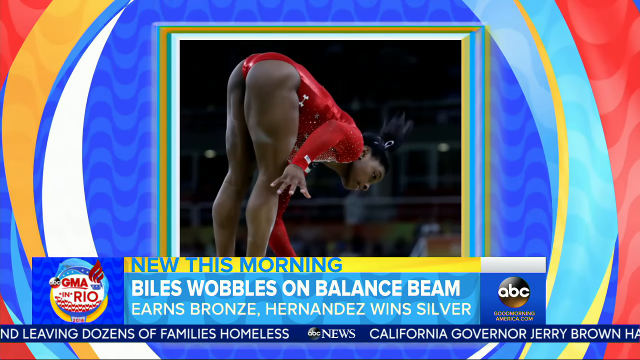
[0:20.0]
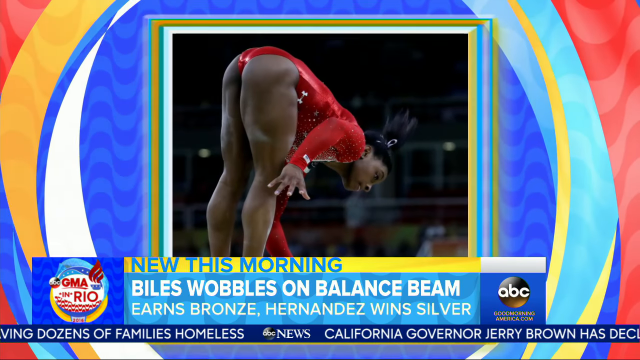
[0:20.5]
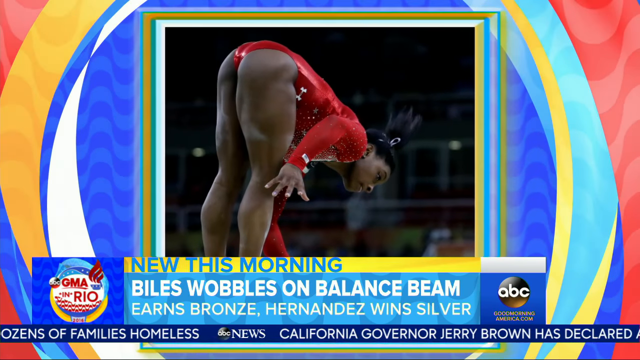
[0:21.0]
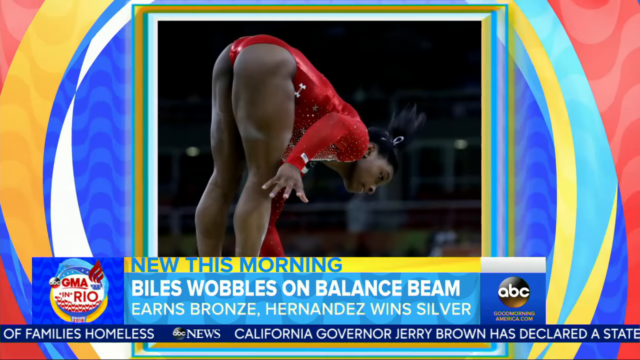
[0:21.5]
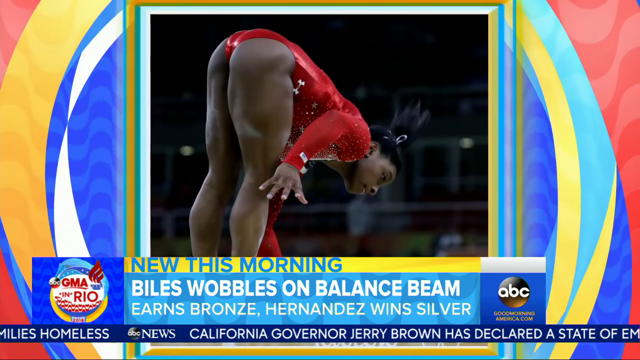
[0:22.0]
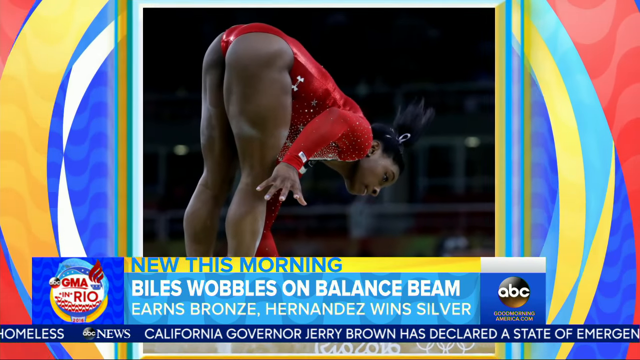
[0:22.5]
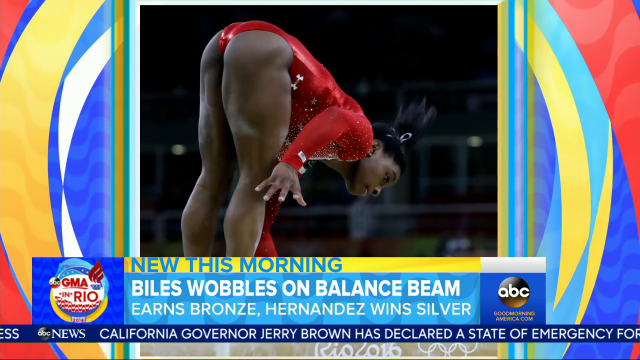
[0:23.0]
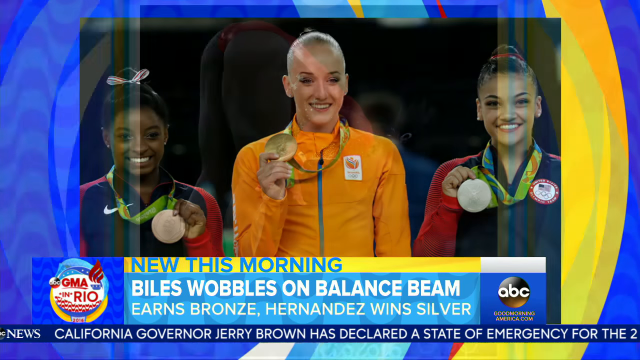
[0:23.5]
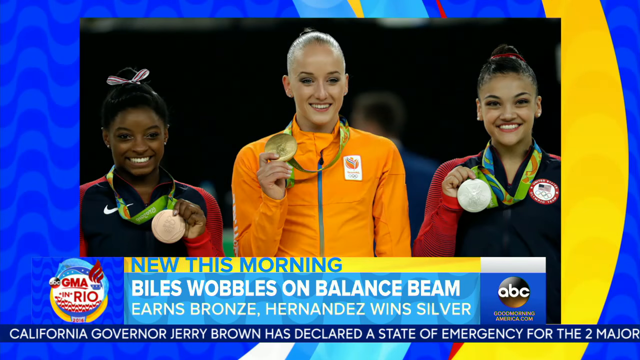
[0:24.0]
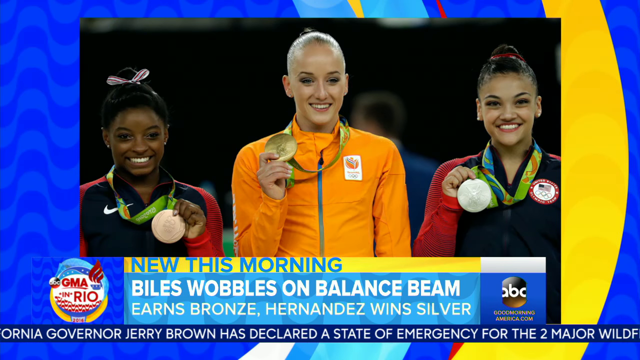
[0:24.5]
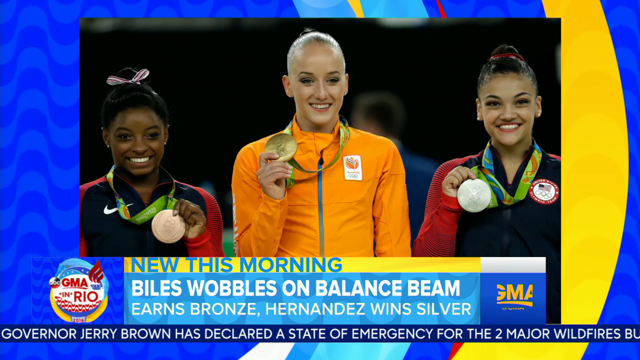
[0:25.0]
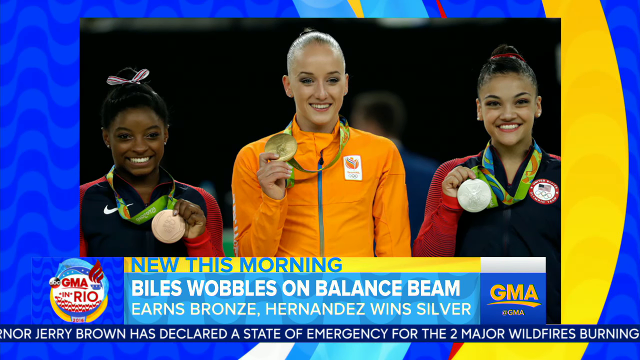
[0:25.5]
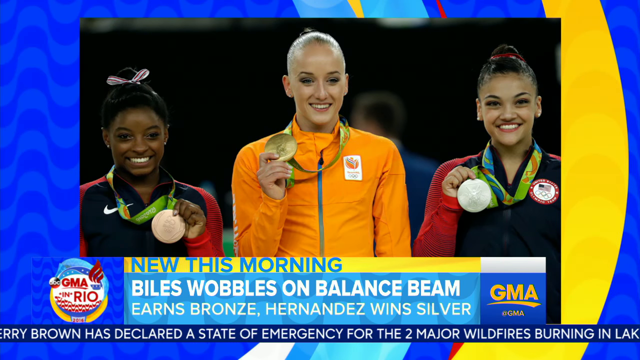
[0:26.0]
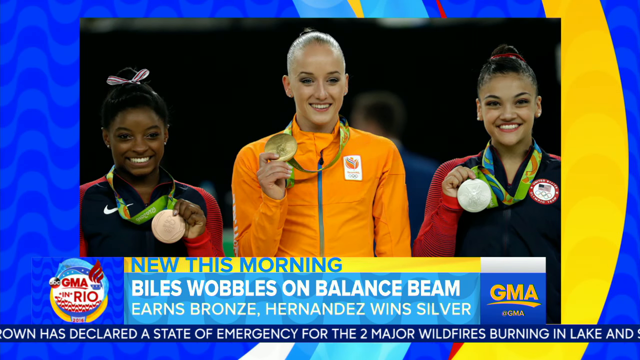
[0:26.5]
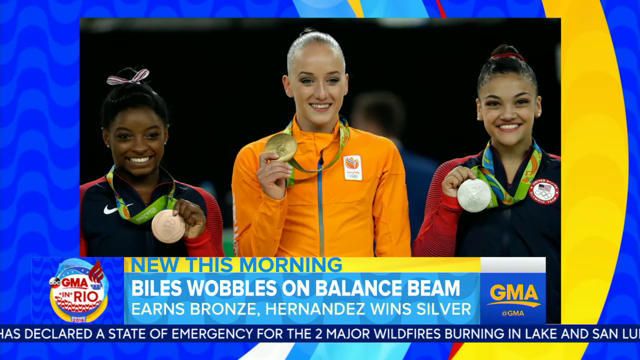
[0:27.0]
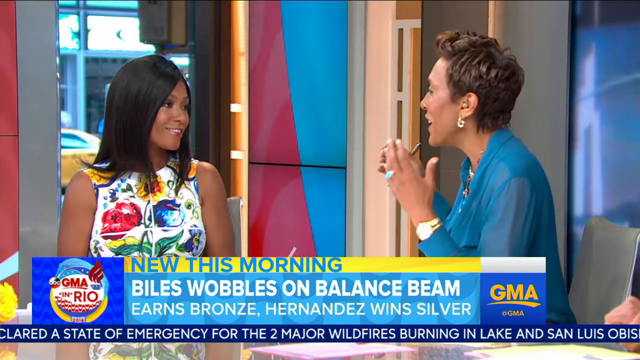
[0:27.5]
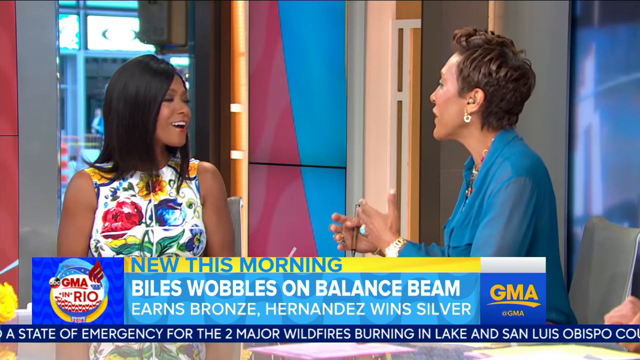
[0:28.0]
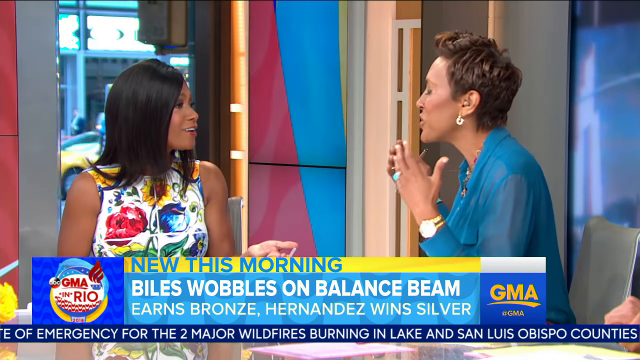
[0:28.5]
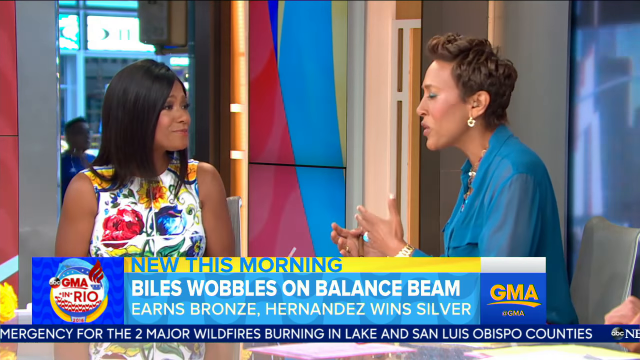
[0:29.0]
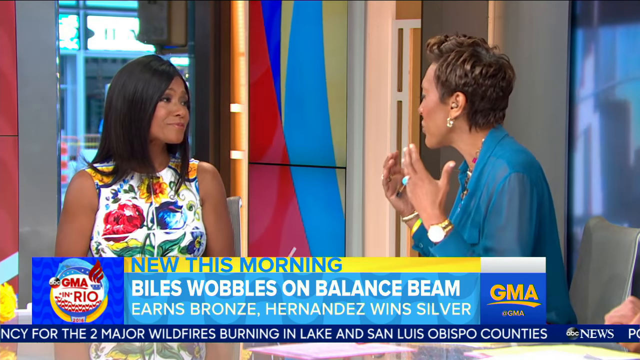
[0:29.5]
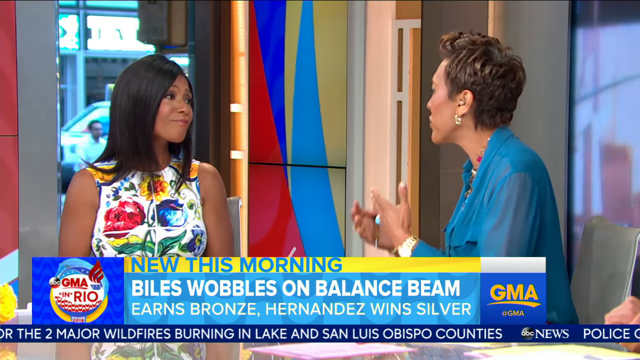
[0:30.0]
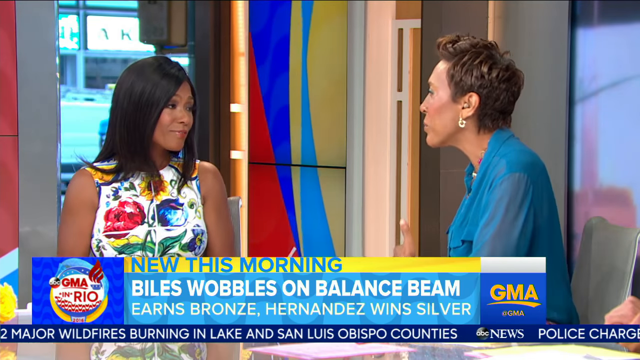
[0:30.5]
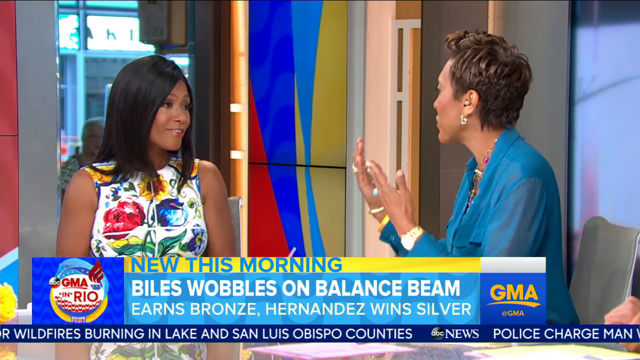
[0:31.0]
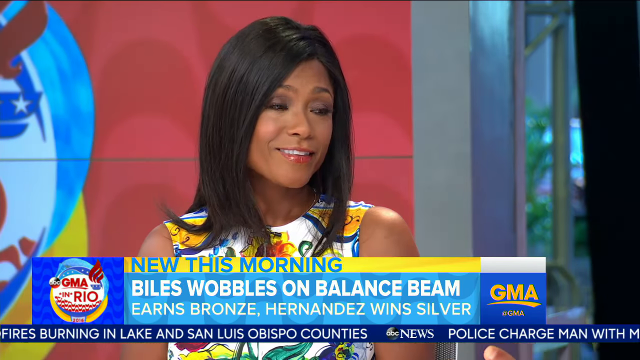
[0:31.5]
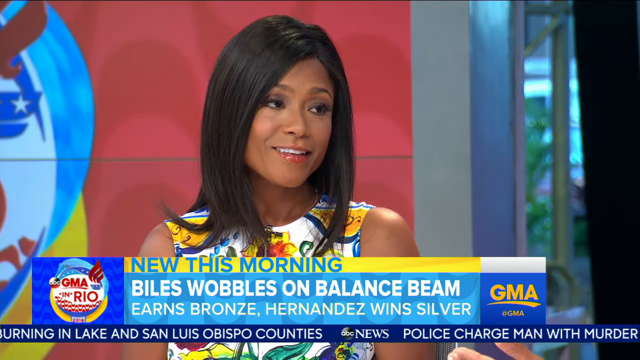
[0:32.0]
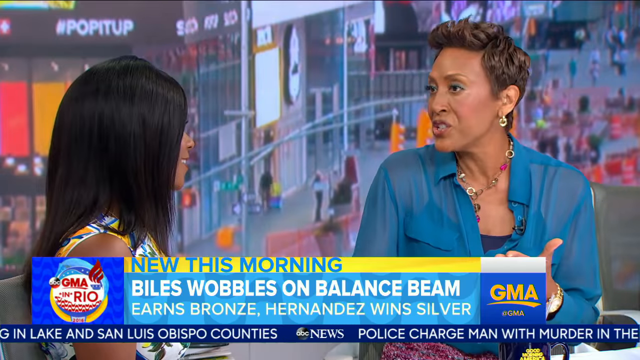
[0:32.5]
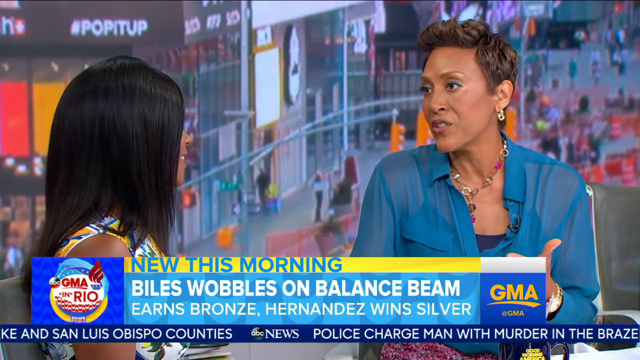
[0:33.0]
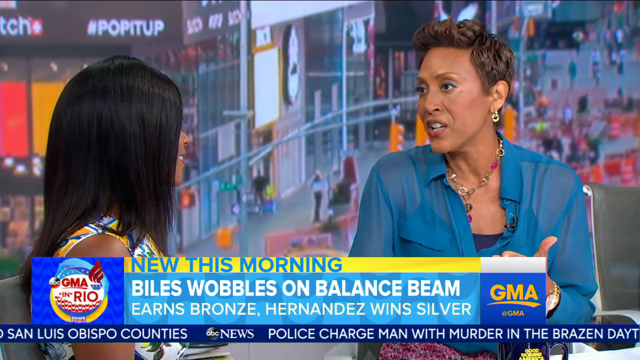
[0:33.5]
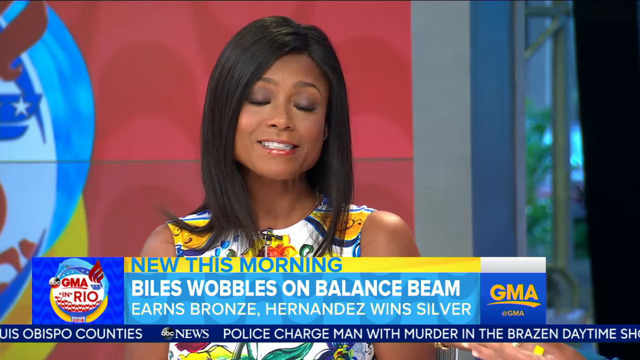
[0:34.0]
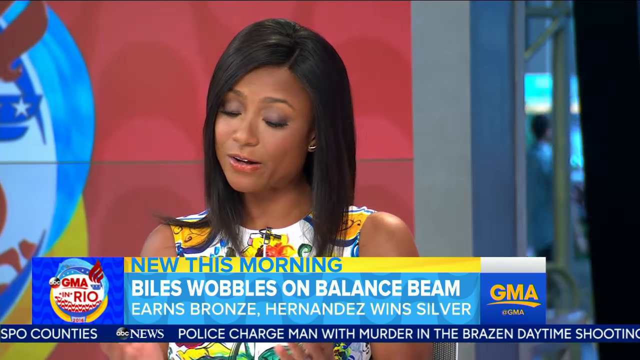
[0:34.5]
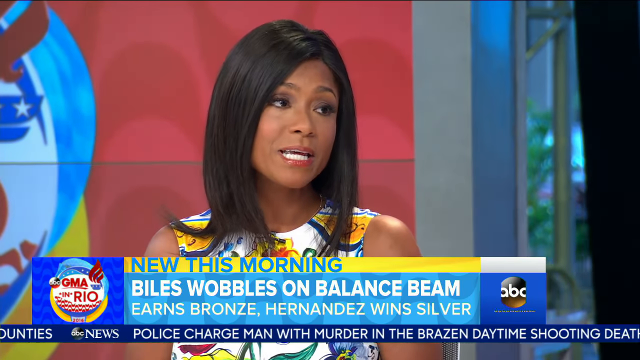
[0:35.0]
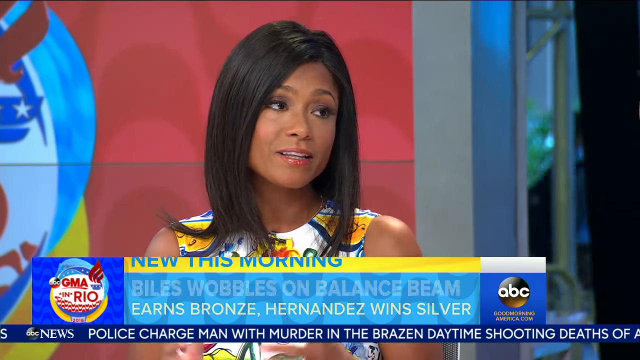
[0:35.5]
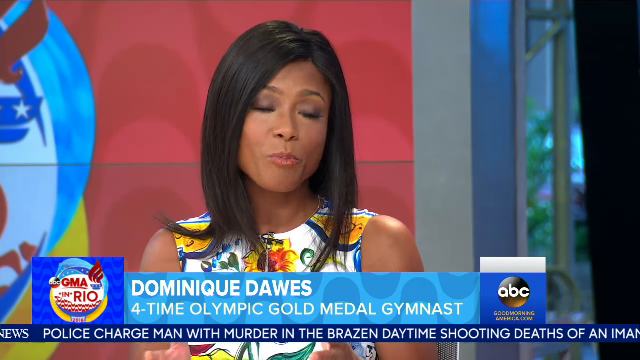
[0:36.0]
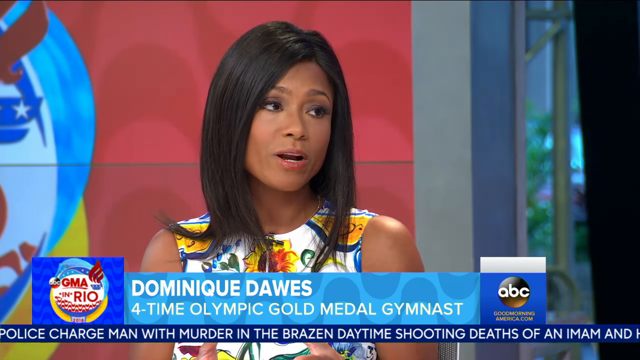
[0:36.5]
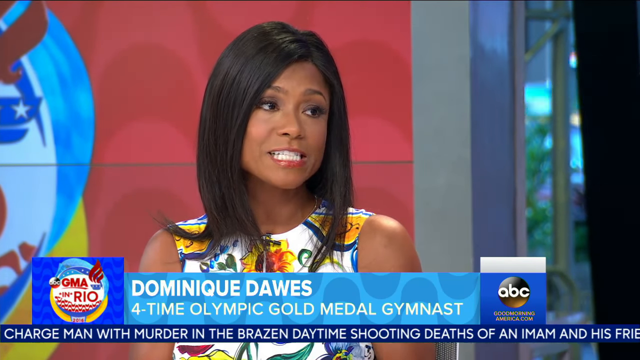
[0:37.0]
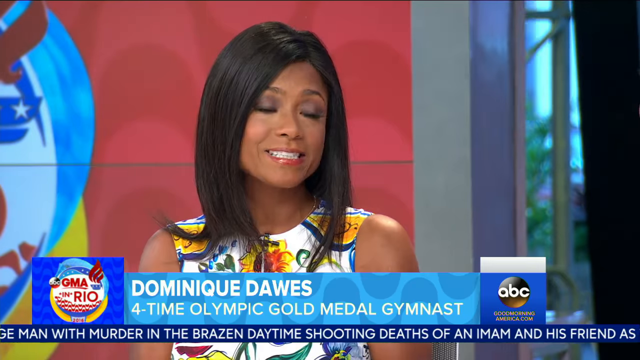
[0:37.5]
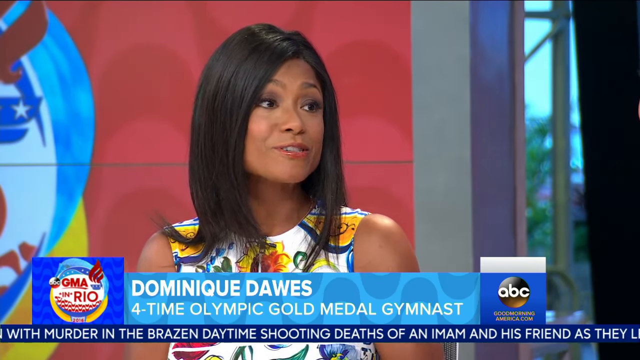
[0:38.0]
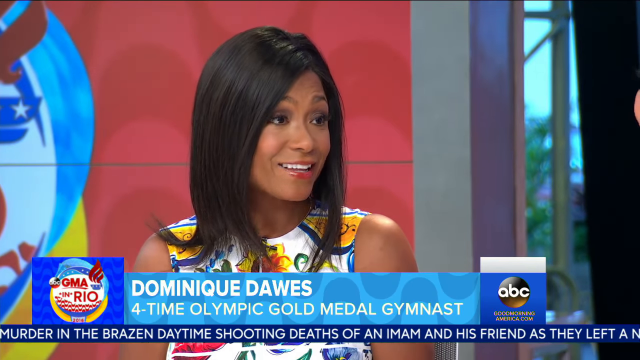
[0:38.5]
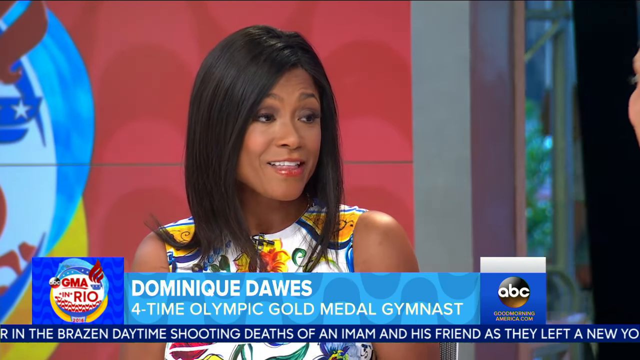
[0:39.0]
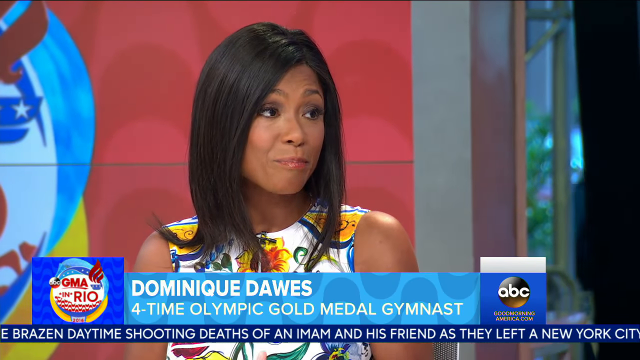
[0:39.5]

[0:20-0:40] A picture shows Simone Biles on the balance beam, bent over as if she is about to fall. She wears a red jumpsuit cut very high around her legs, her hair is clipped up, and her fingers are taped. The screen around the picture has many colors, such as blue, white, yellow and red. Text reads "Biles wobbles on balance beam, earns bronze. Hernandez wins the silver," with "GMA in Rio" next to it, and news slides across the bottom of the screen. Next, a picture shows Simone Biles and two other gymnasts holding up the medals around their necks, all smiling broadly. Robin Roberts then has a conversation with Dominique Dawes, four-time Olympic gold medalist, who has shiny hair and wears a short-sleeved dress cut at the shoulders with many different patterns and colors. Dawes is bubbly and happy, and the two talk and laugh with big smiles. Robin Roberts wears a lot of jewelry, including a fancy-looking gold watch, and uses her hands a lot as she speaks. Then Simone Biles is shown about to fall off the beam again.